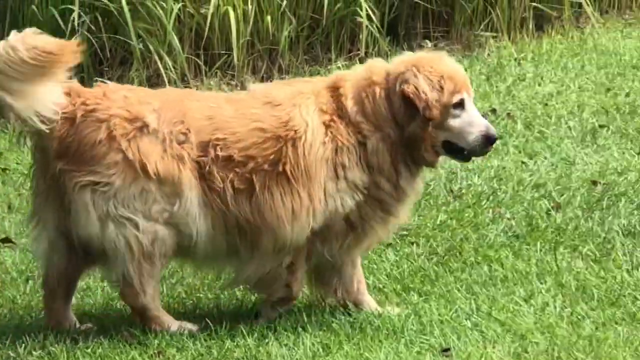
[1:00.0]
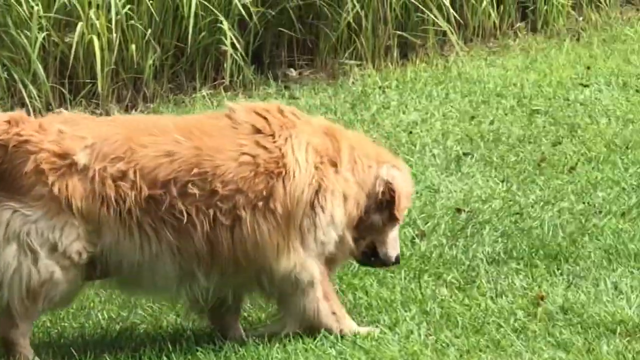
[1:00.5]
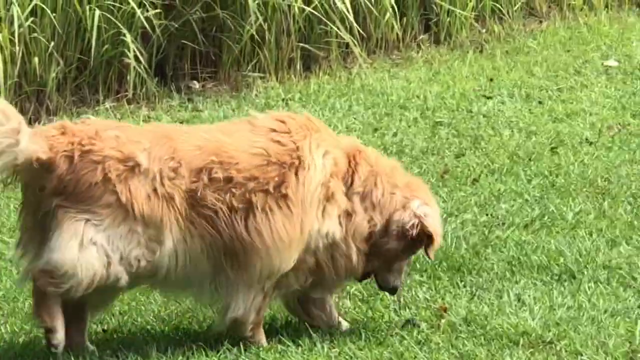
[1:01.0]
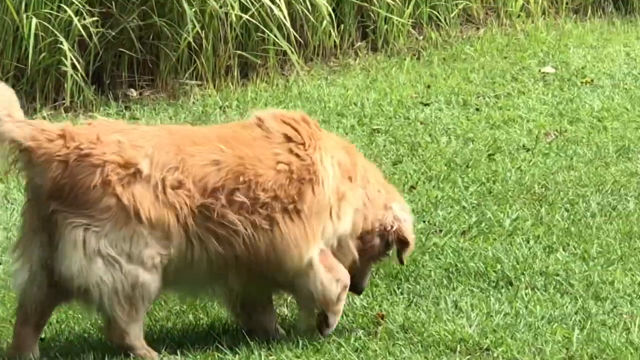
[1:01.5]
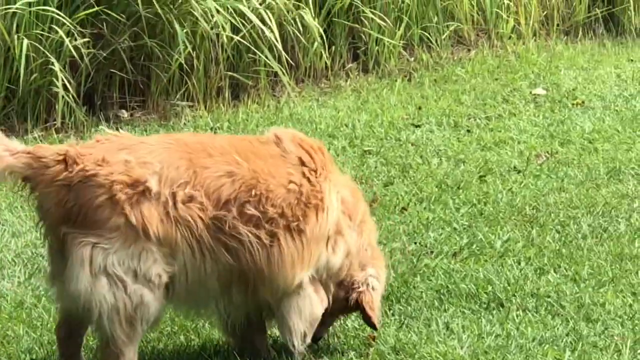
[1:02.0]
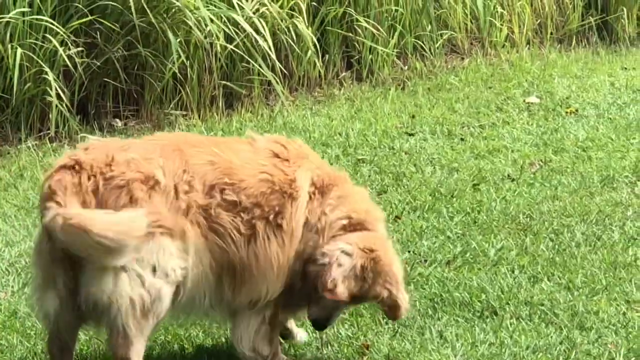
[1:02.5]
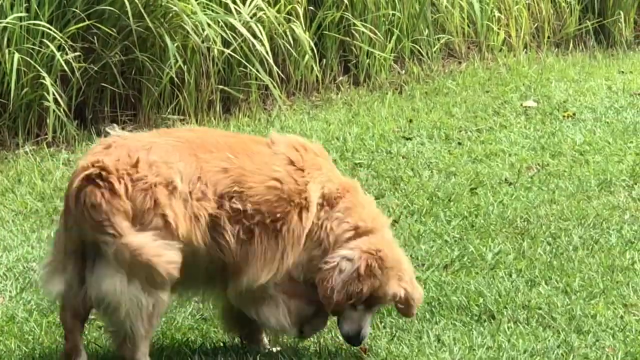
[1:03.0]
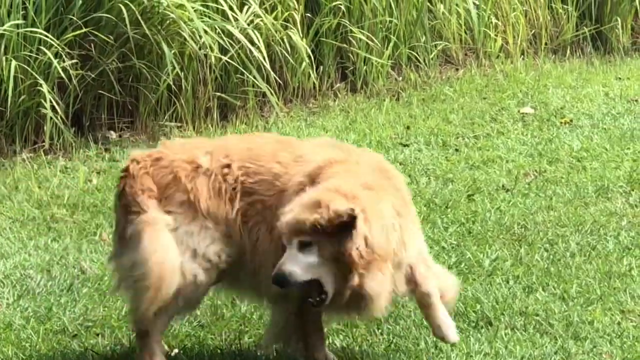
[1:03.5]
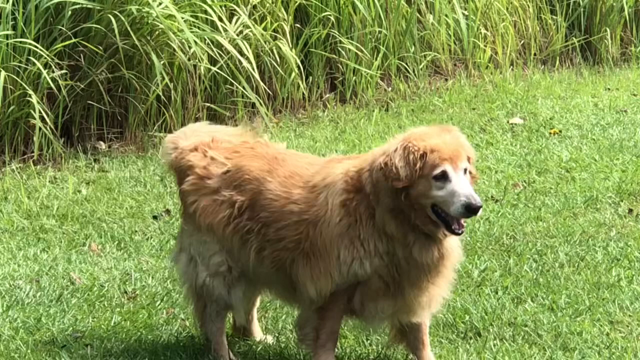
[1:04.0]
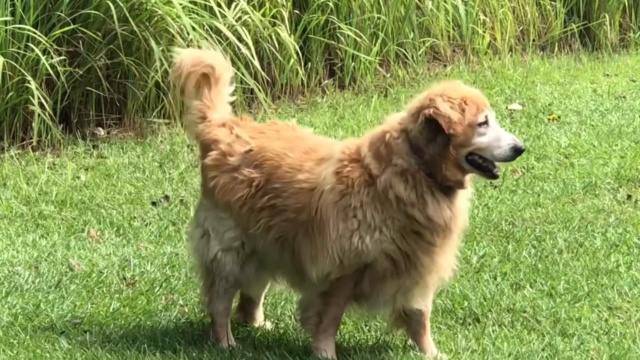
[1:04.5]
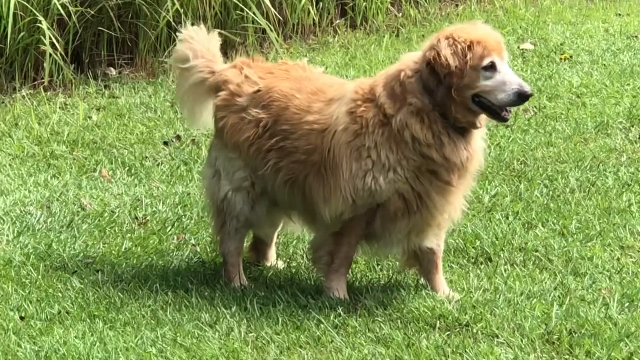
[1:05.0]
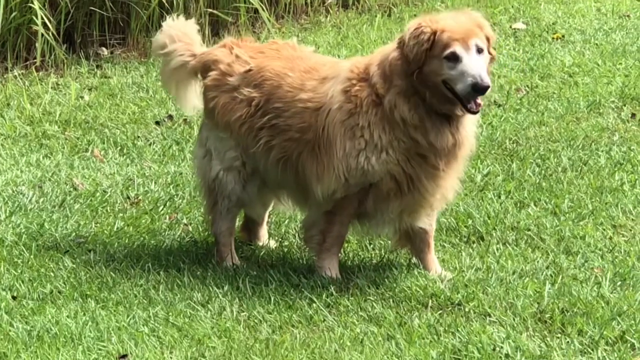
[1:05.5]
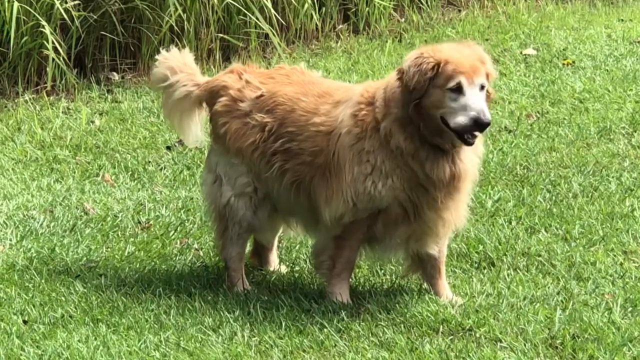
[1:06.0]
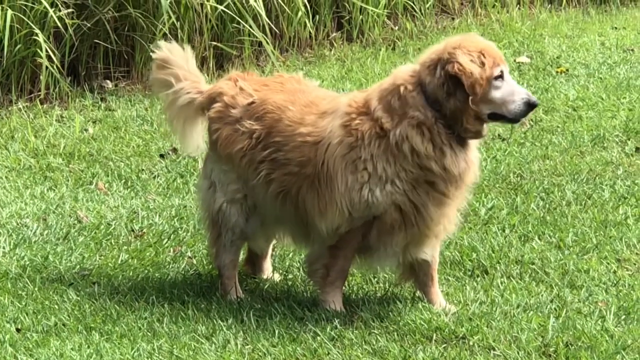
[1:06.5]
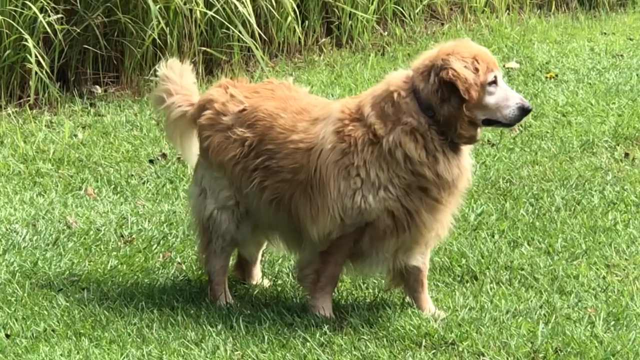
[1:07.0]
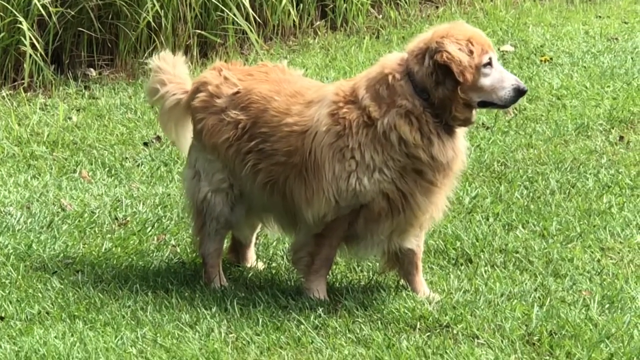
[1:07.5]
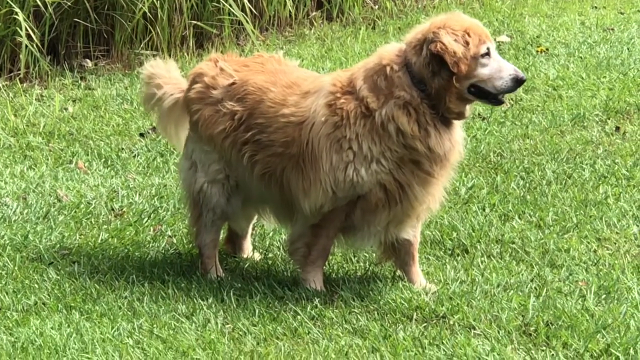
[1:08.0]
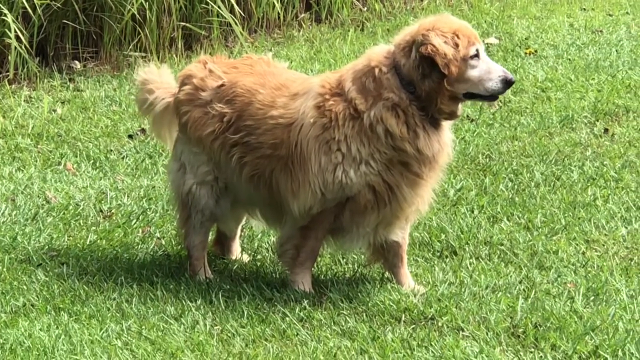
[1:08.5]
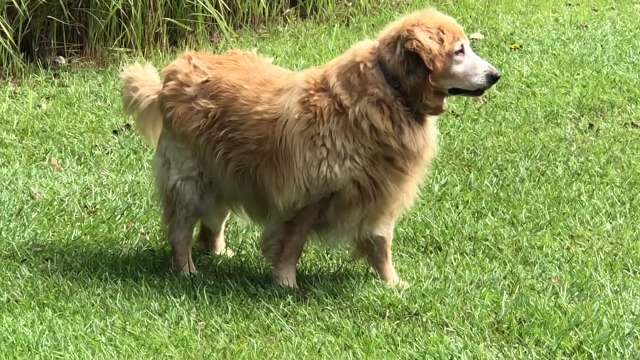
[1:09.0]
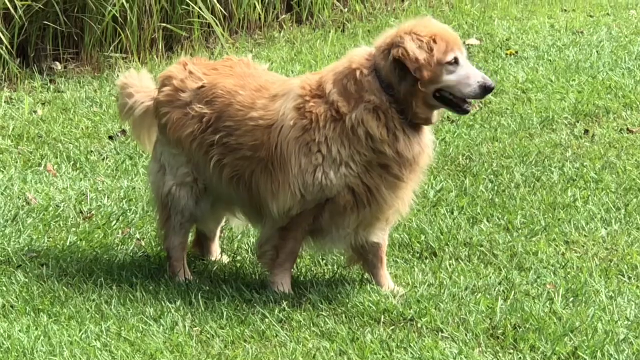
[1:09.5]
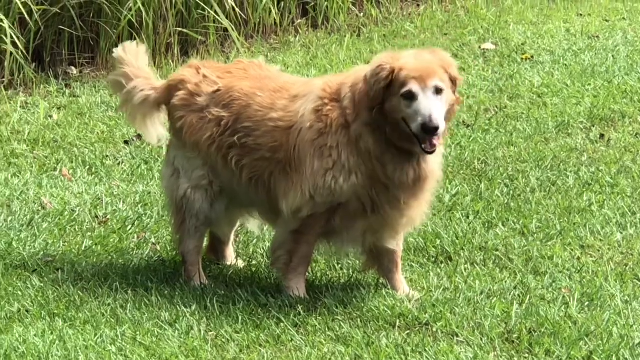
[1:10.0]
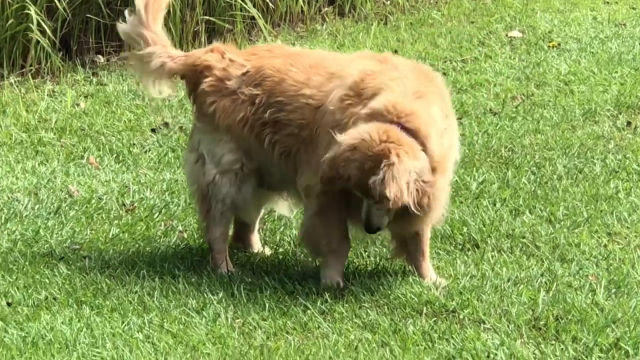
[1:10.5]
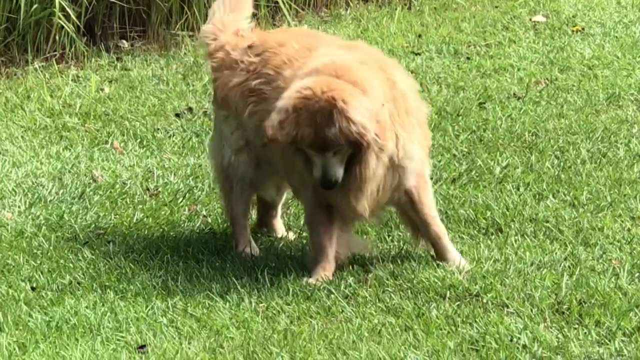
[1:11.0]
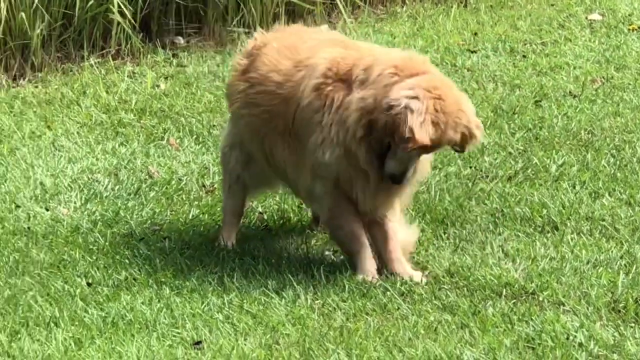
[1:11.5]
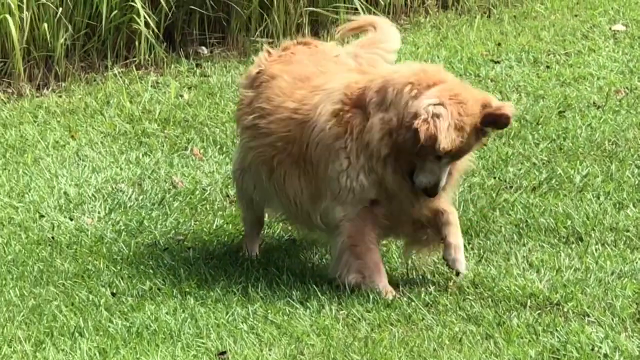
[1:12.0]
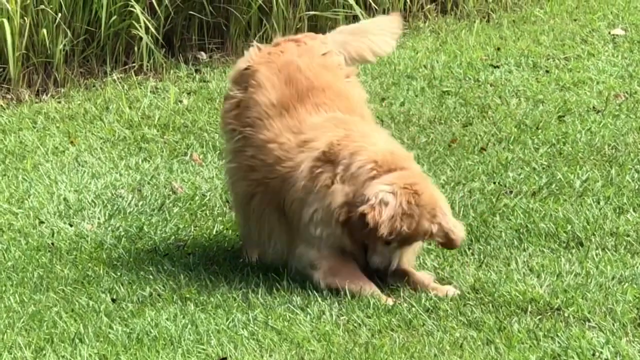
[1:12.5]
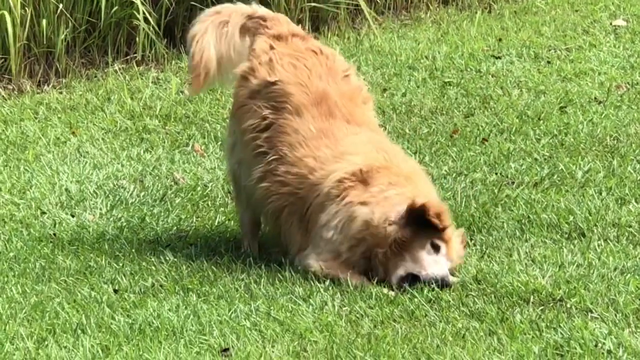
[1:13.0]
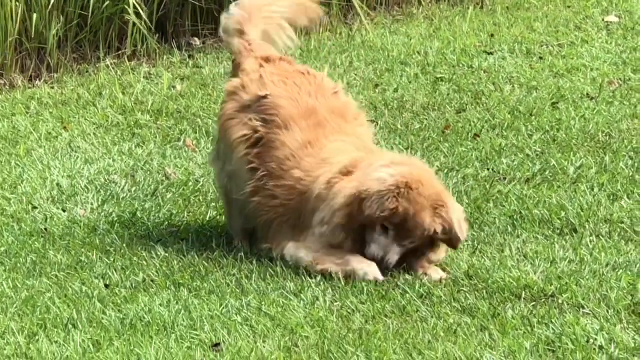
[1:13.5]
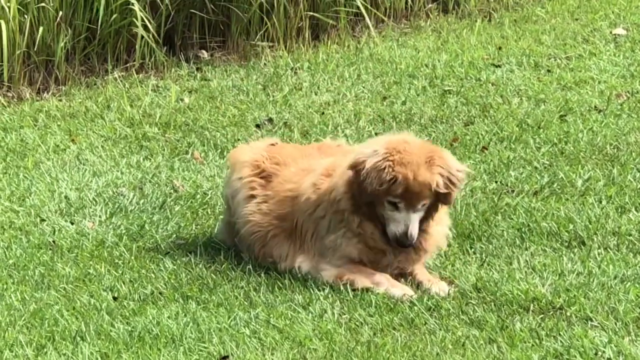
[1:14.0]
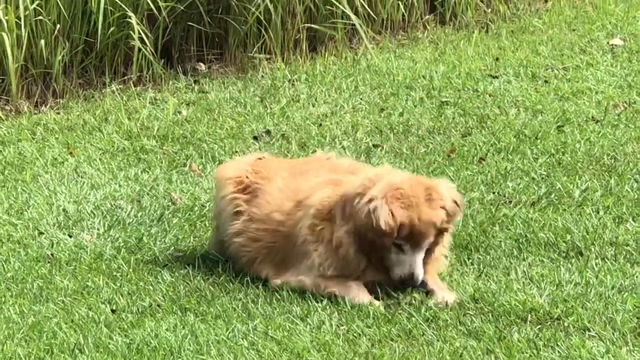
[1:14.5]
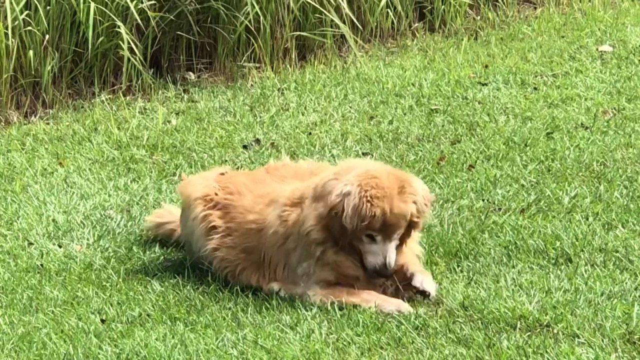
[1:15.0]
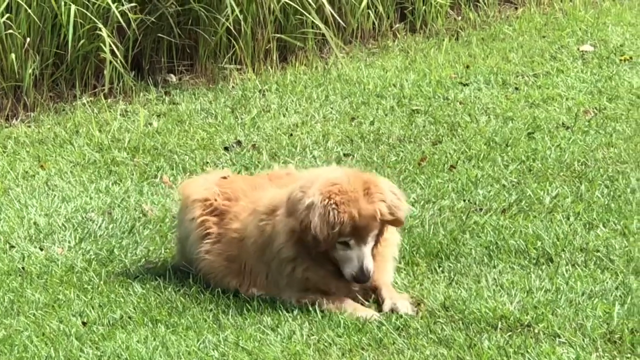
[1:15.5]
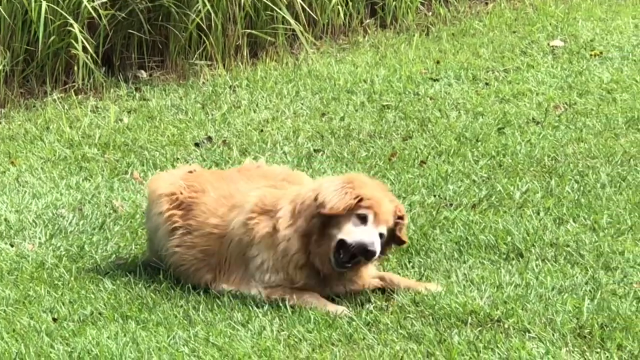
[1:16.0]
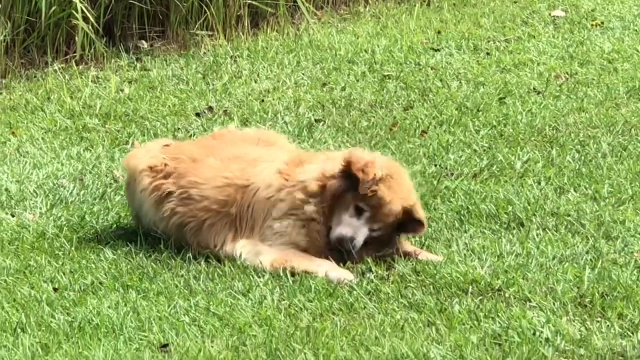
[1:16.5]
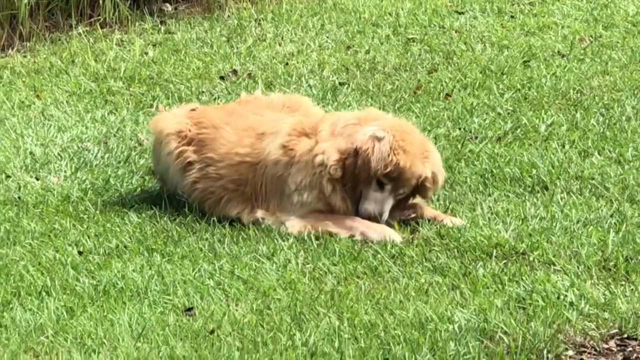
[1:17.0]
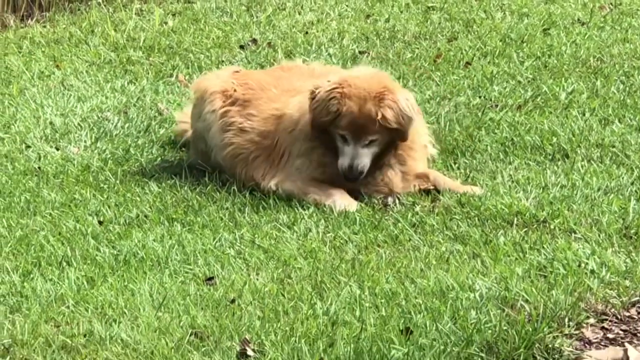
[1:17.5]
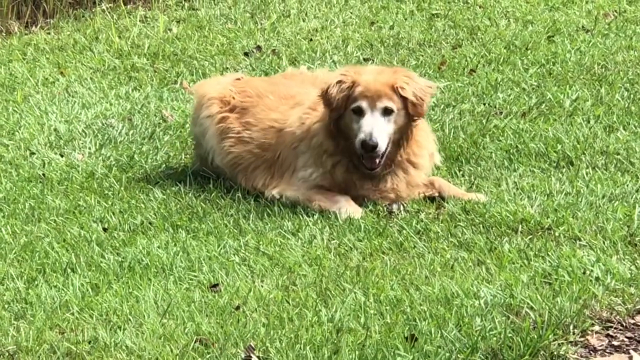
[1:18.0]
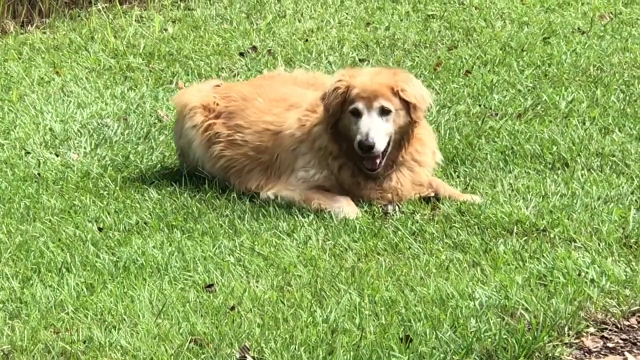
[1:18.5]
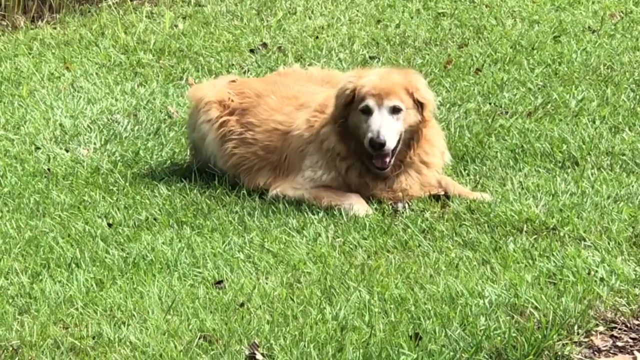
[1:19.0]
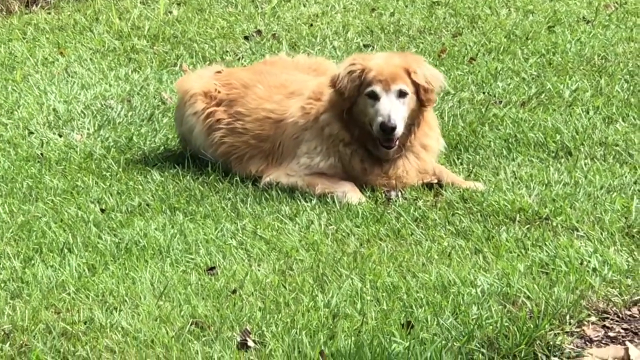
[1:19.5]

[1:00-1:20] The camera now focuses only on the dog, showing it fully. It continues walking to the right, looking at the ground. It seems to have something in its mouth, which it drops; it looks like a kind of small stone or a brown ball. The dog starts to smell it, then shakes, moves and gives a little jump, moving its tail and face from side to side with its mouth open. It looks up attentively, as if someone had called its name, though it seems to be looking at nothing, then looks down again and starts playing with the object it was carrying. It lies on the ground and moves its head as if it wanted to bite the thing, seemingly playing with it.